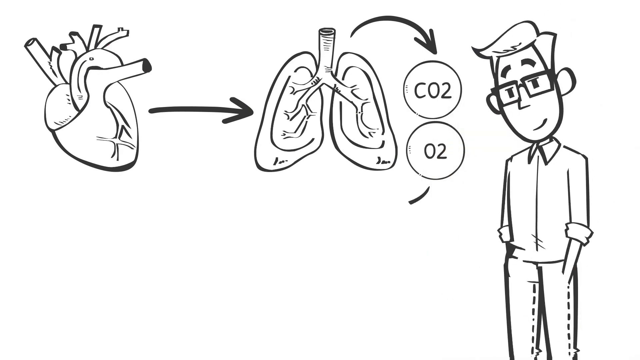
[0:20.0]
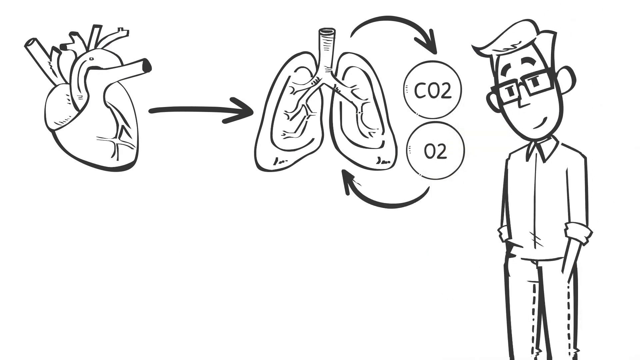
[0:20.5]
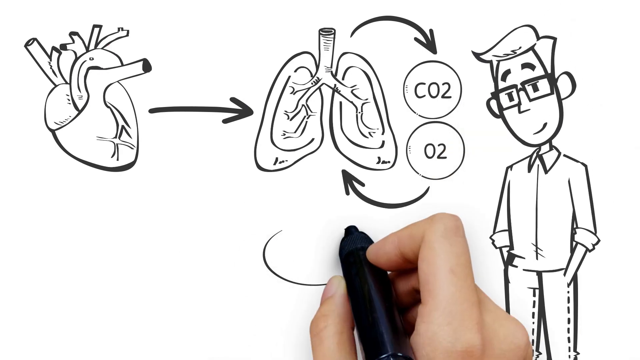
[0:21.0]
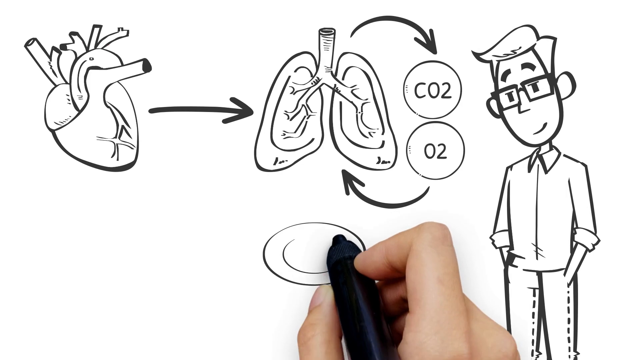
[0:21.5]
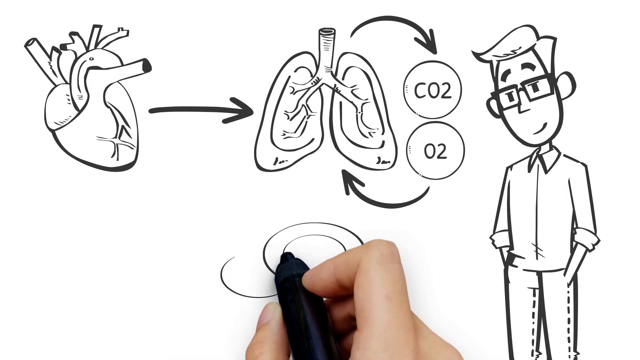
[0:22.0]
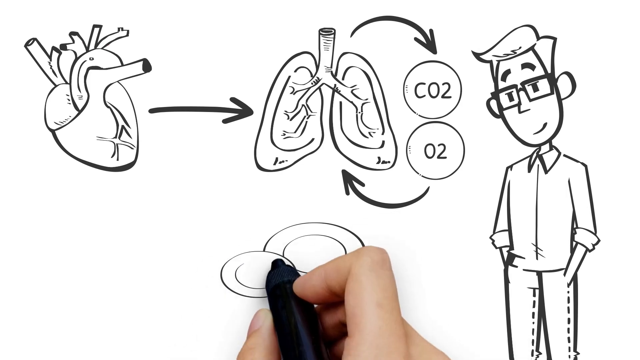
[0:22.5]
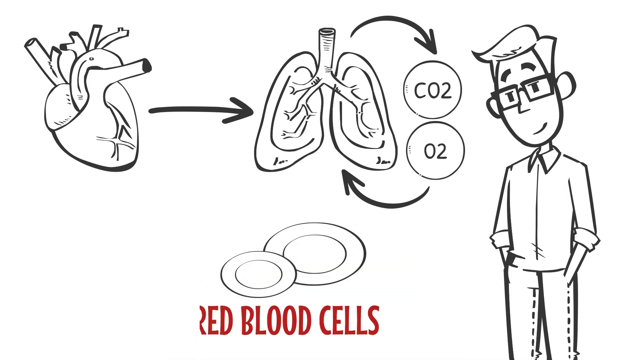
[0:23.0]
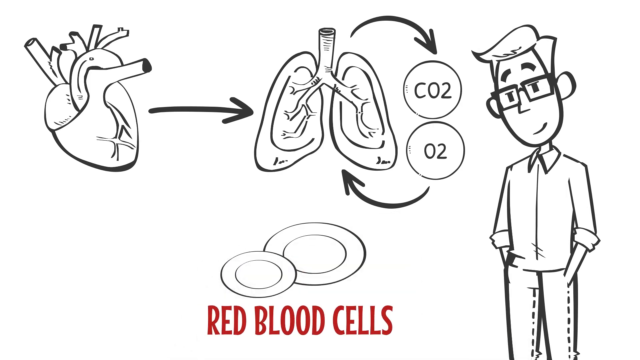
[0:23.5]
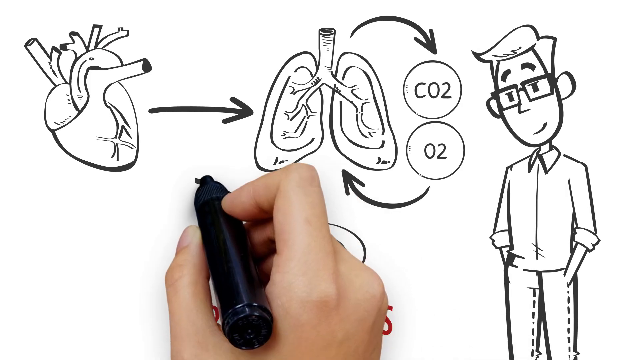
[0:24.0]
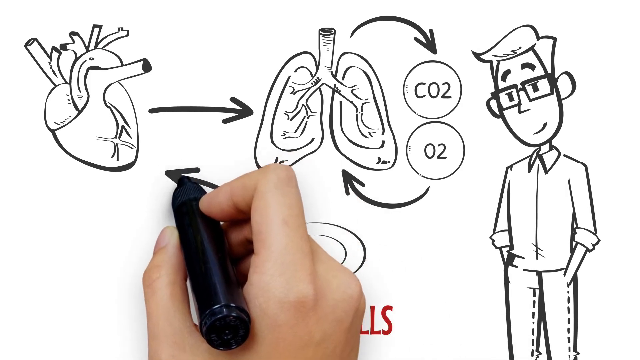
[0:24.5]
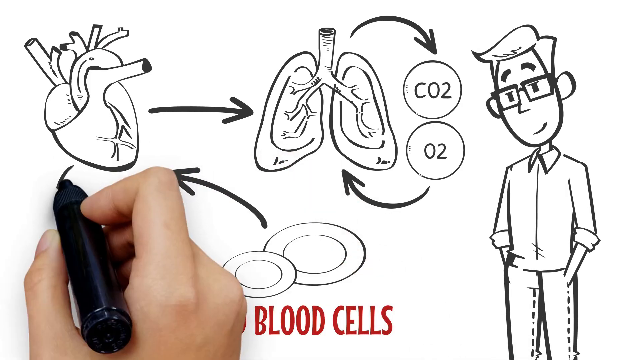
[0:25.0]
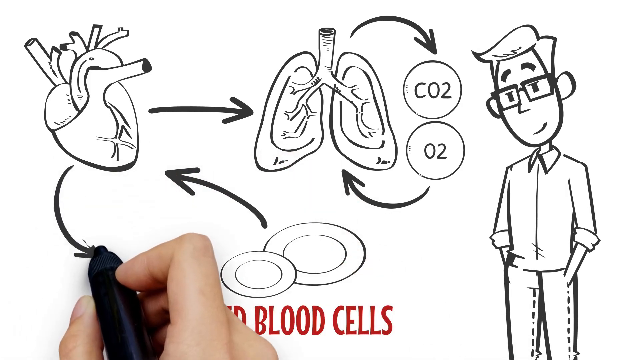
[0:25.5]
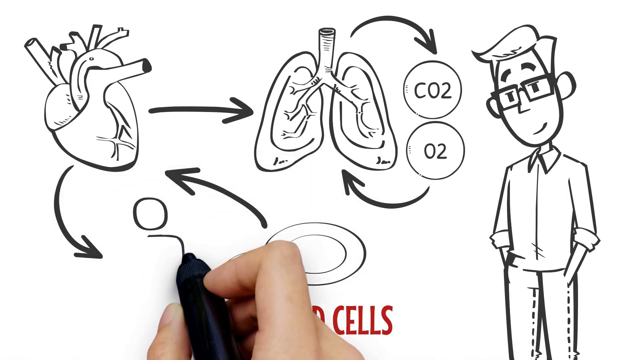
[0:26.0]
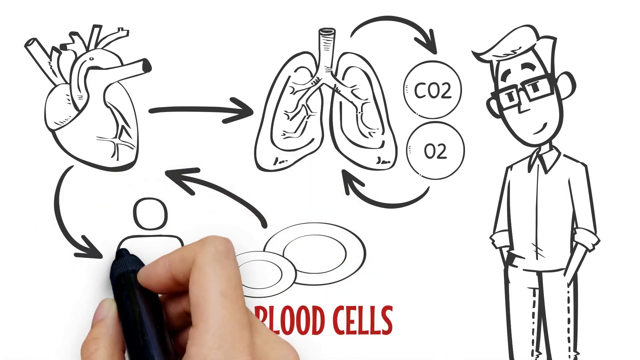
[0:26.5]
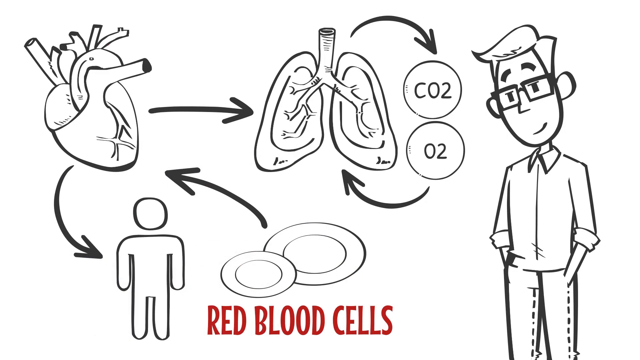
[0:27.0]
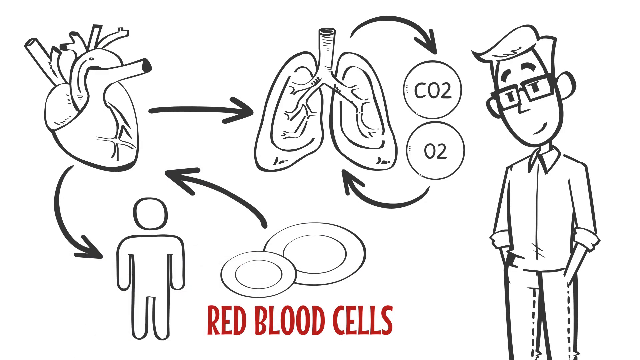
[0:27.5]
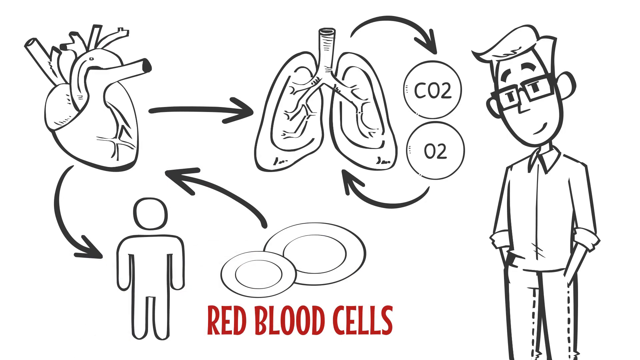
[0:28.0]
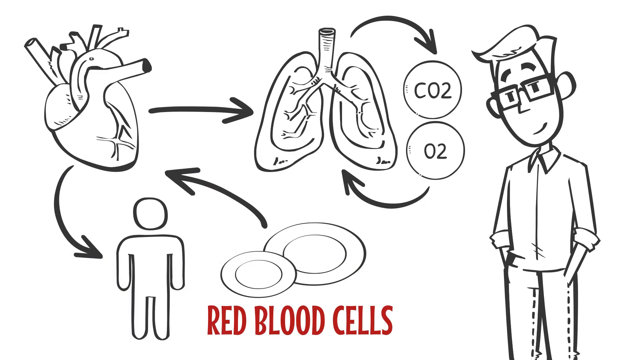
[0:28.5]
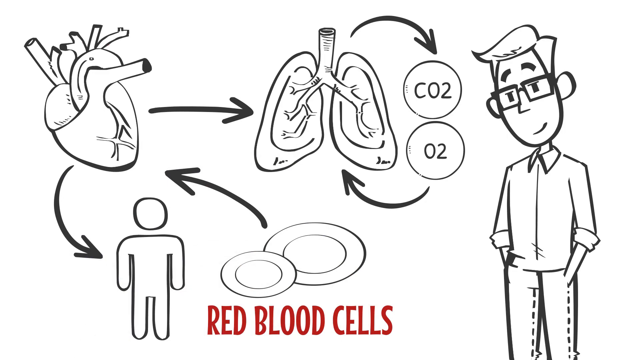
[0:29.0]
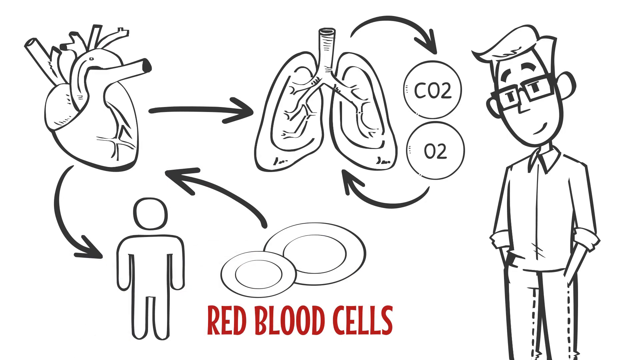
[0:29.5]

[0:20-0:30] The drawing shows the heart, the lungs and the CO2 and O2 labels, with the patient on the right-hand side. The person draws red blood cells, labeled "red blood cells" at the bottom, then draws an arrow from the red blood cells to the heart and another arrow from the heart to the patient. It looks like a cycle of red blood cells going into the heart and being pumped into the body, represented with pictures. The O2 points to the lungs. The patient on the right wears glasses, has his hands in his pockets and has a smirk on his face.